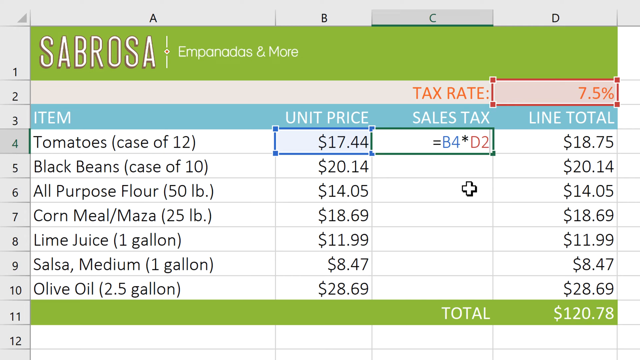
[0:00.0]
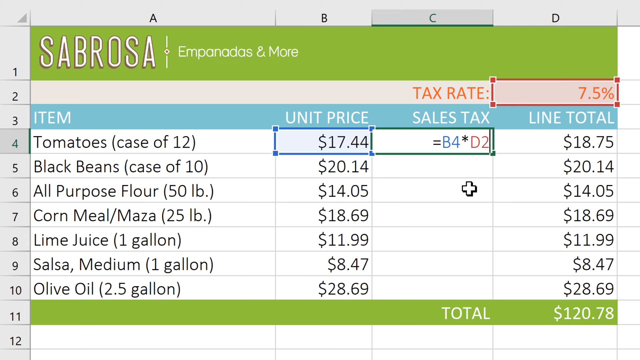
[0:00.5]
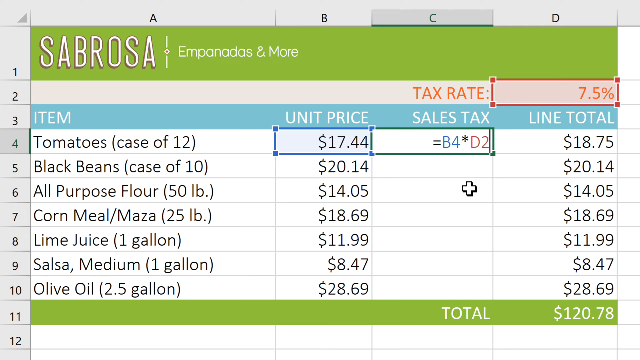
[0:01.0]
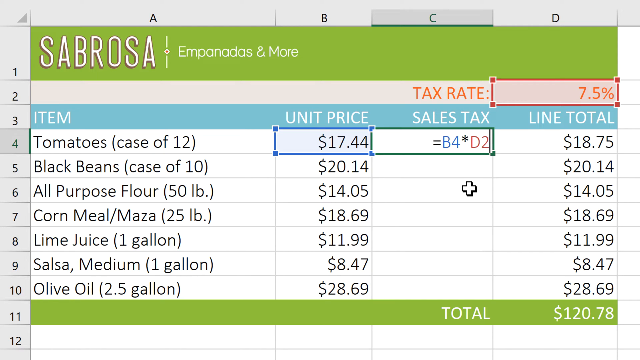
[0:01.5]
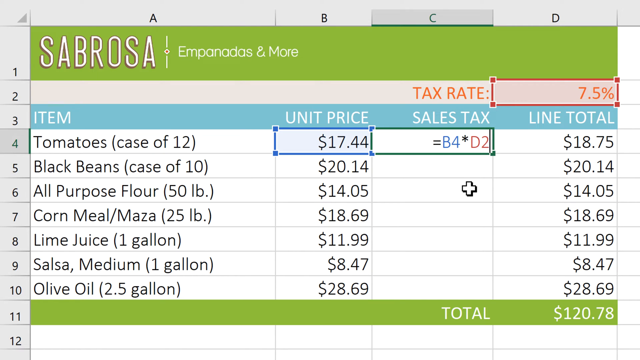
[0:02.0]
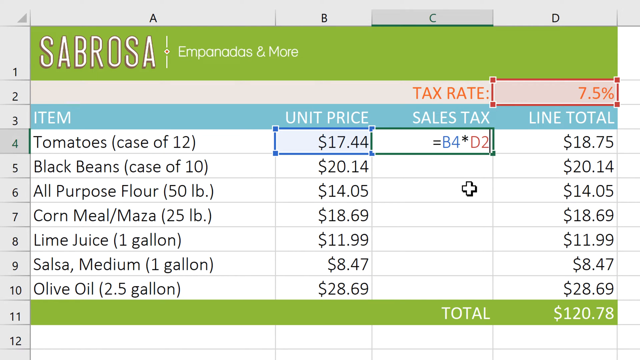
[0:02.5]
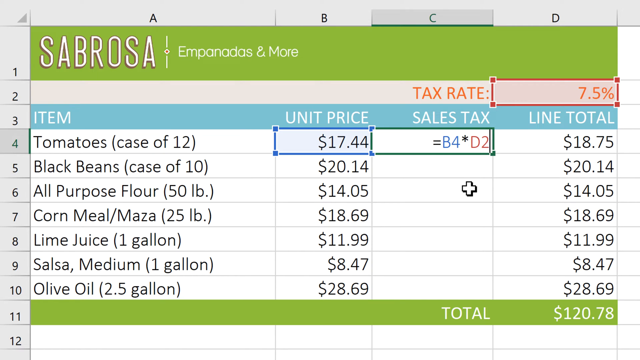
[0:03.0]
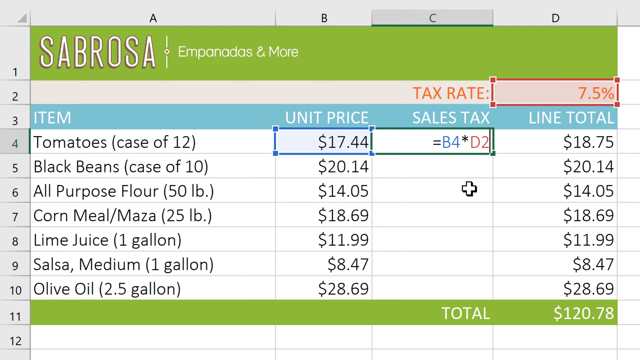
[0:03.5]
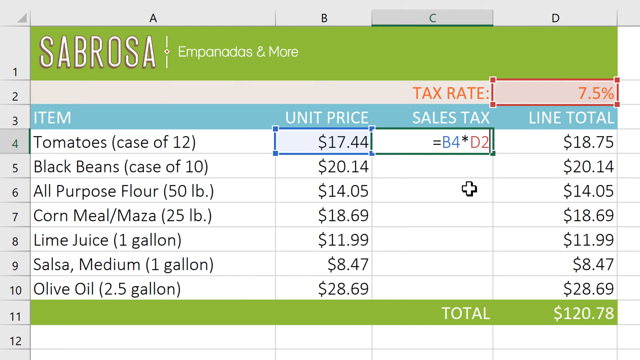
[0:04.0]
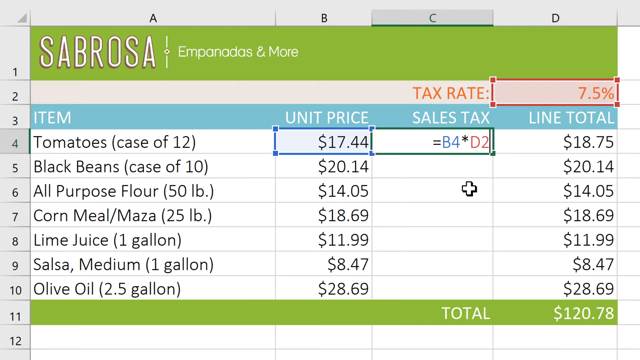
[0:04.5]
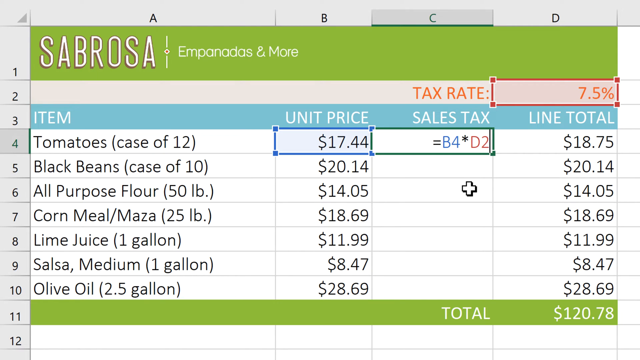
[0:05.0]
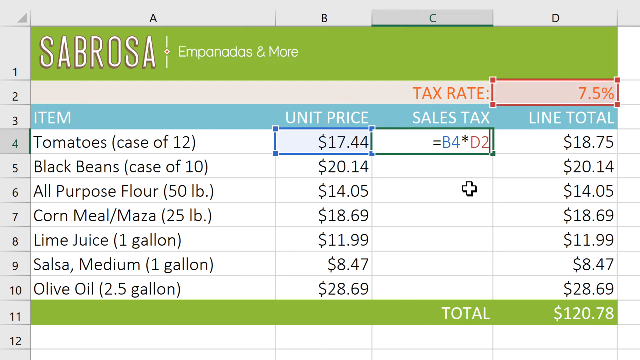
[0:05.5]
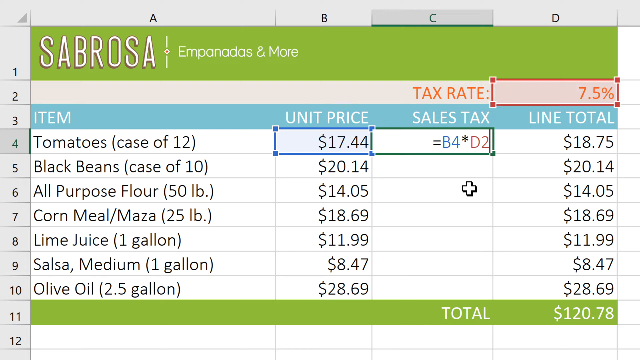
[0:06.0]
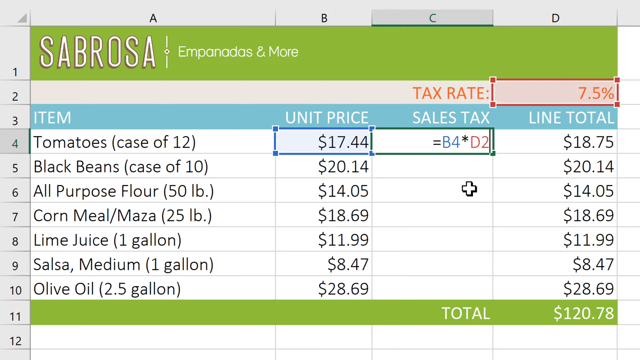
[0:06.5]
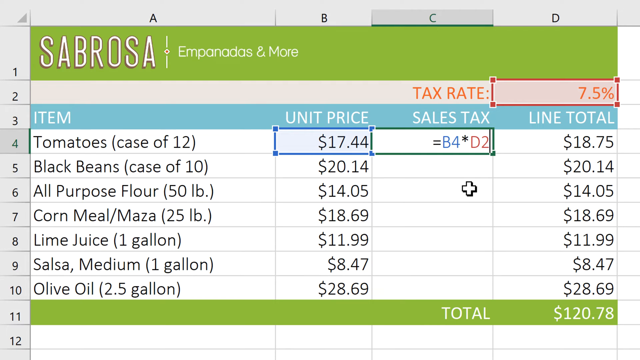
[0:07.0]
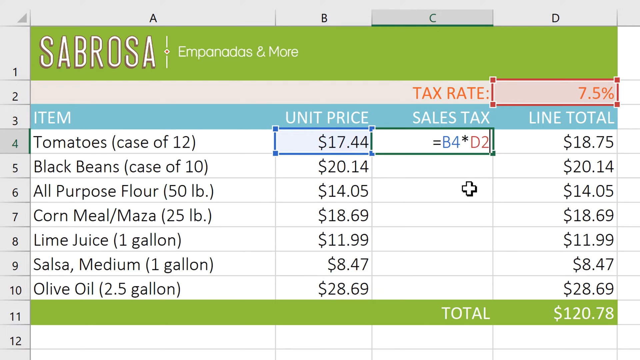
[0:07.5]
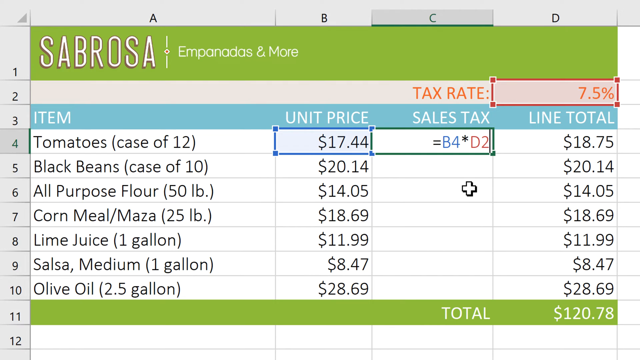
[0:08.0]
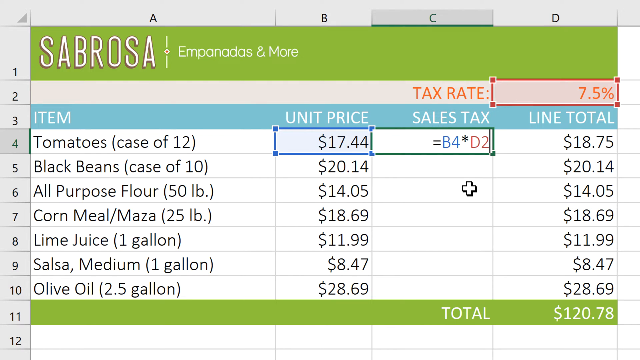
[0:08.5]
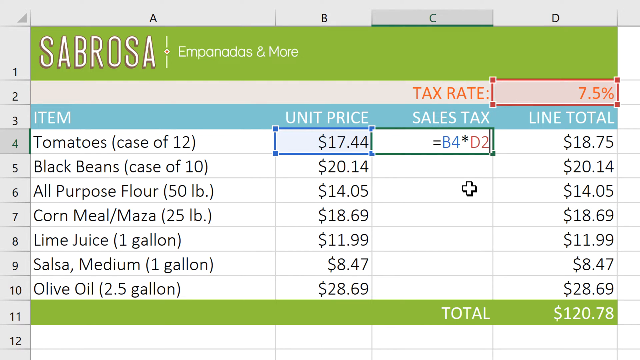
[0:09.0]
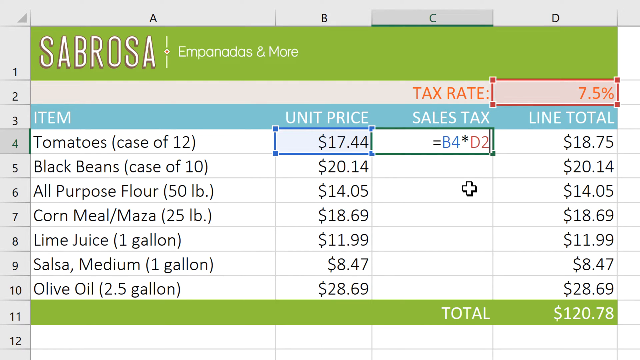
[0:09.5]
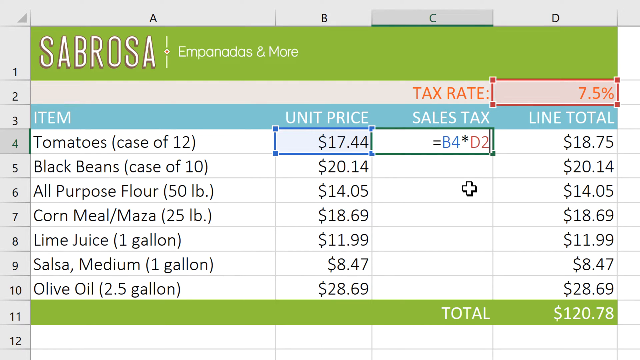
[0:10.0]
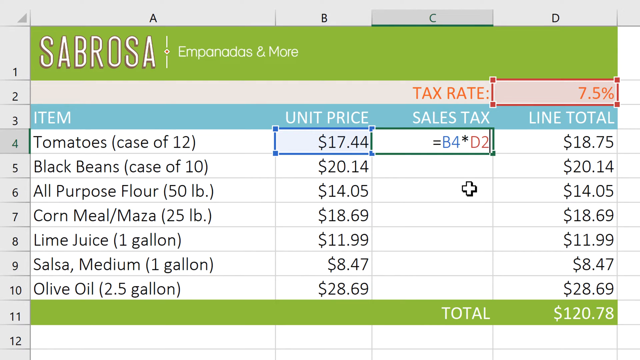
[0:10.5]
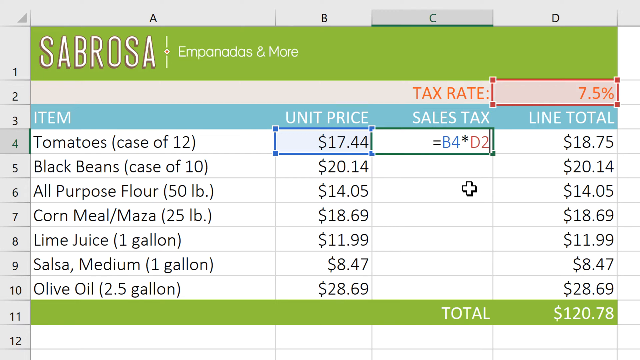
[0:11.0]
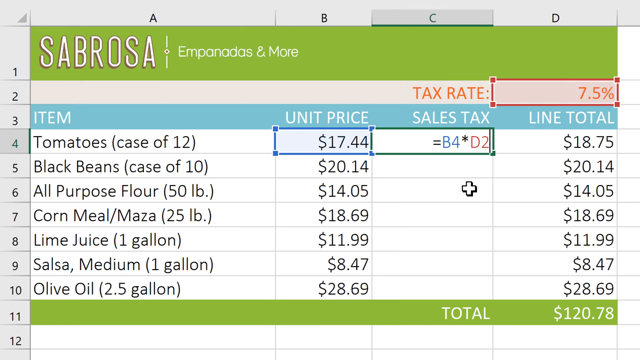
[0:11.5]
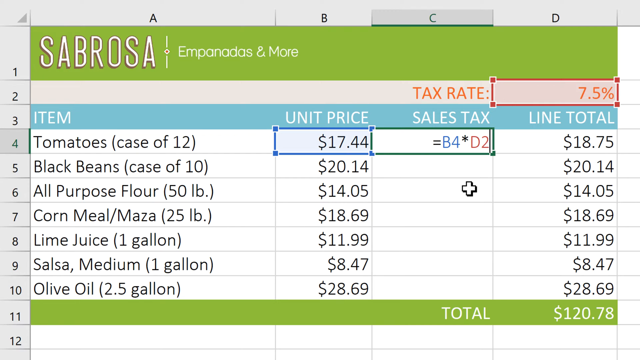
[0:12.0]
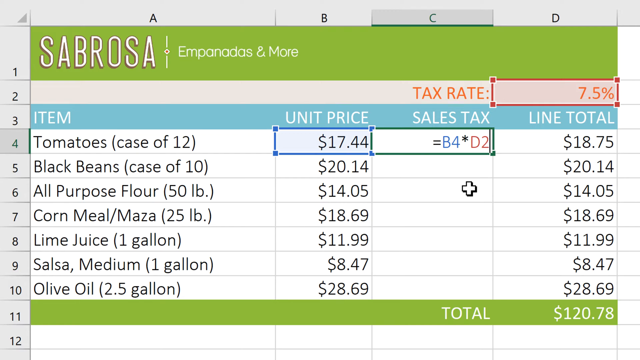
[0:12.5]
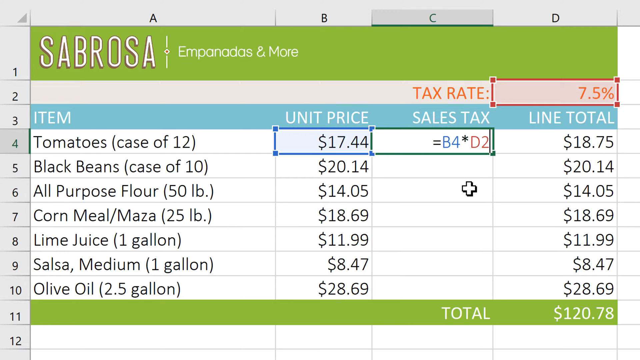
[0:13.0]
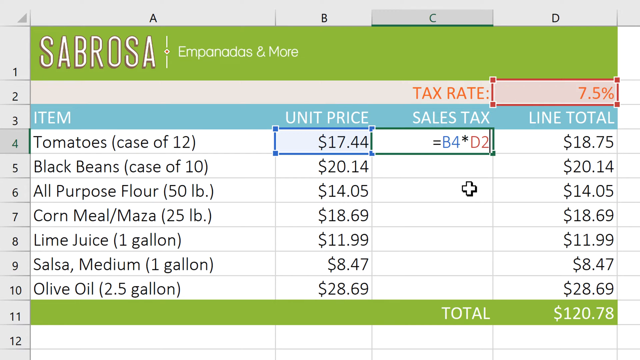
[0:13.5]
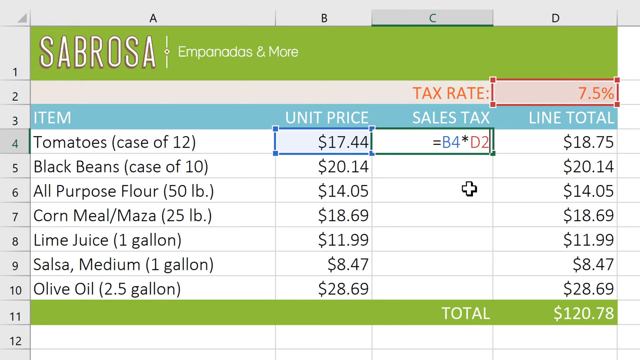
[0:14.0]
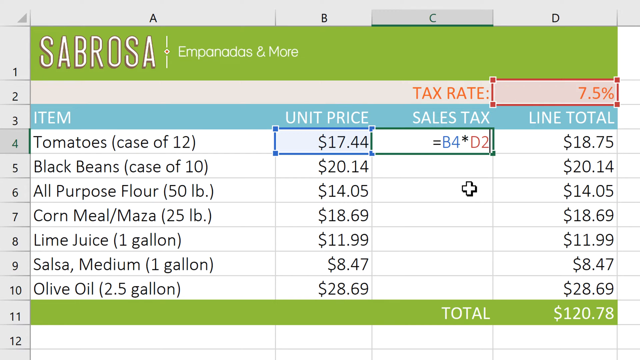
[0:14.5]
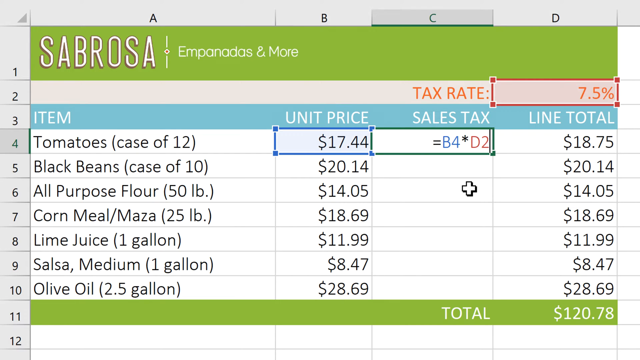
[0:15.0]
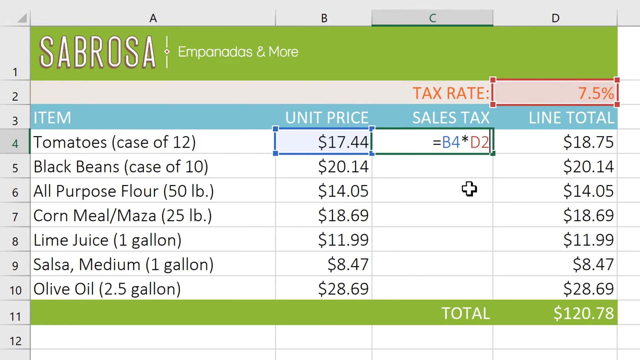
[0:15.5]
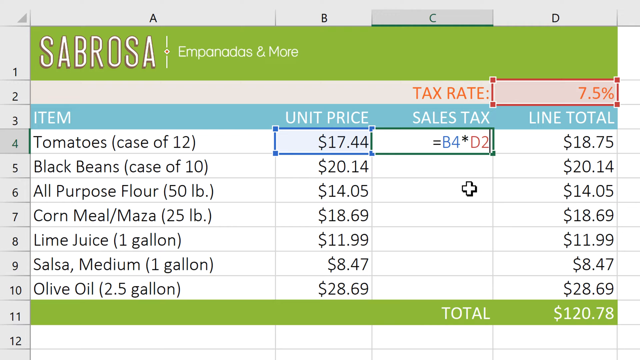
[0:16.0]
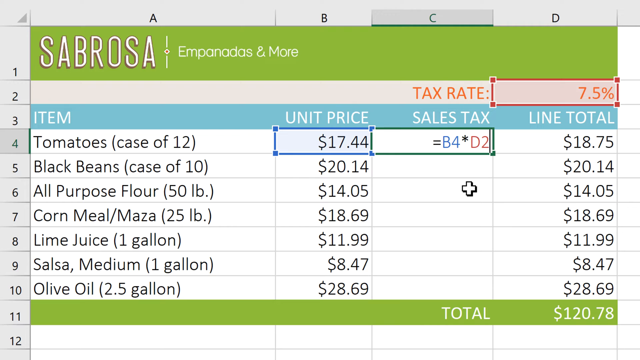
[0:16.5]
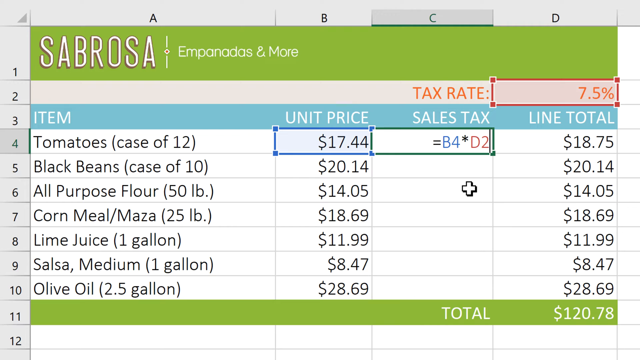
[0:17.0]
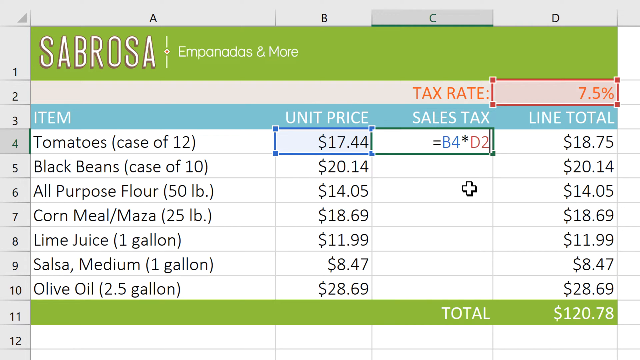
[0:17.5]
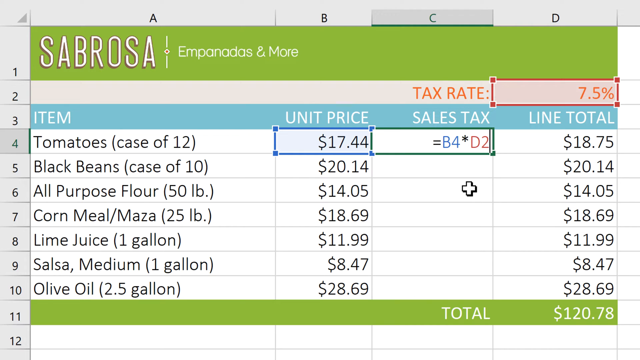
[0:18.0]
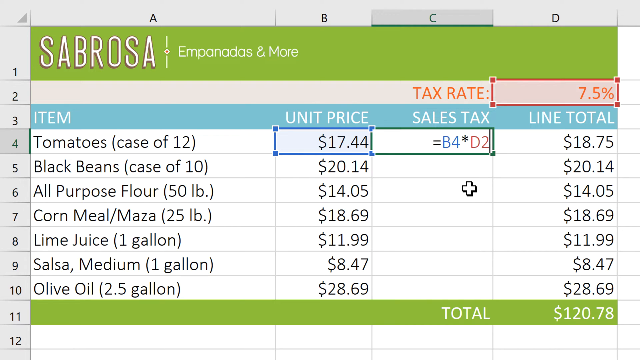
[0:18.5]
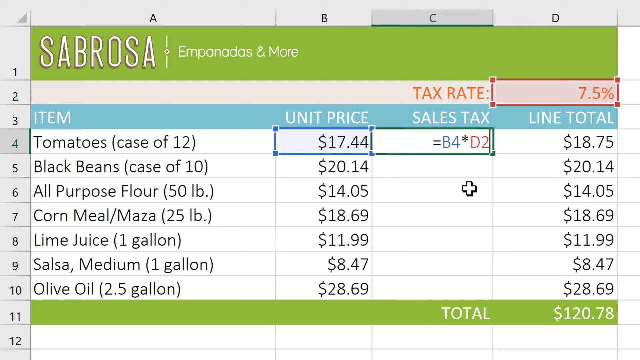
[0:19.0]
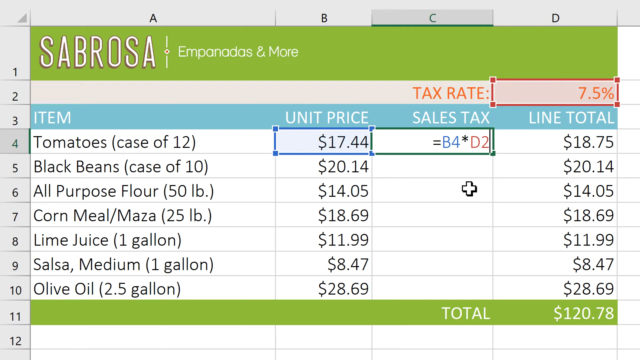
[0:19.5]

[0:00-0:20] "Sabrosa" and "Empanadas and more" are written at the top on a green background. Below are columns A, B, C and D with items listed: tomatoes, case of 12, for $17.44, with the sales tax showing B4 and D2; black beans, case of 10, $20.14; all-purpose flour, 50 LB, $14.05; cornmeal or maza, 25 LB; lime juice, 1 gallon, $11.99; salsa medium, 1 gallon, $8.47; and olive oil, 2.5 gallon, $28.69. The total is $120.78. The page looks like an Excel page showing the items, unit price, sales tax, line total and tax rate.